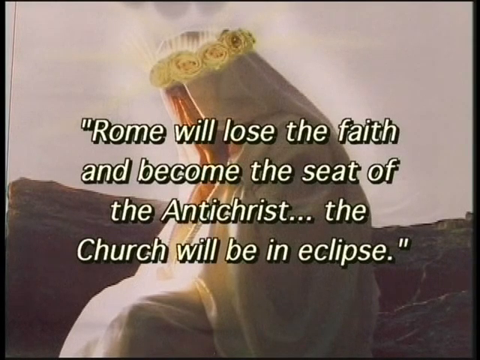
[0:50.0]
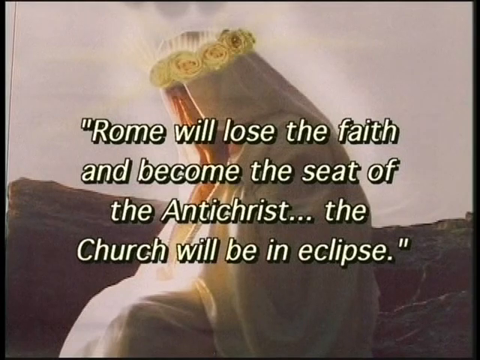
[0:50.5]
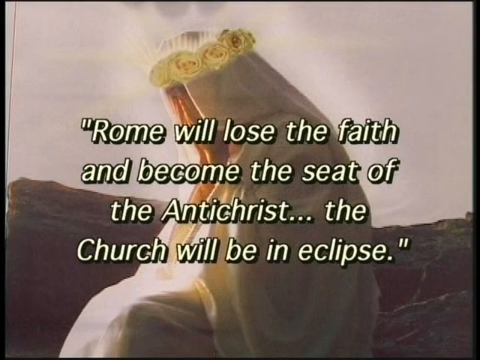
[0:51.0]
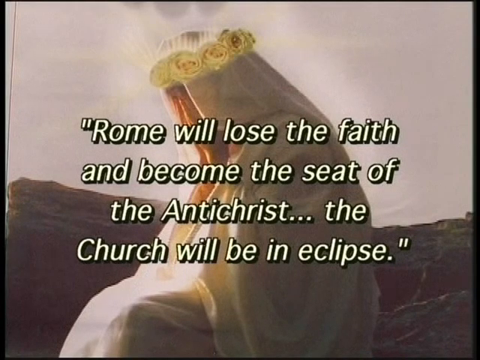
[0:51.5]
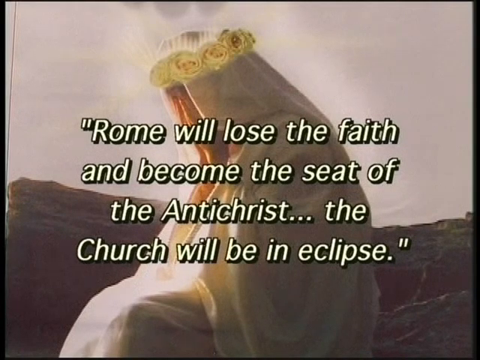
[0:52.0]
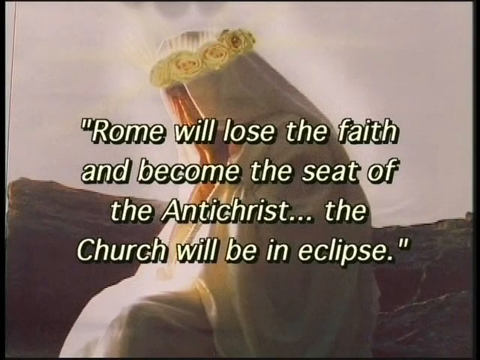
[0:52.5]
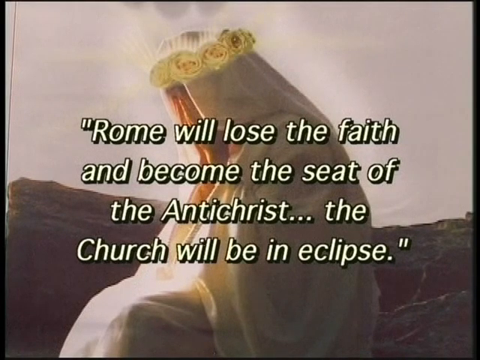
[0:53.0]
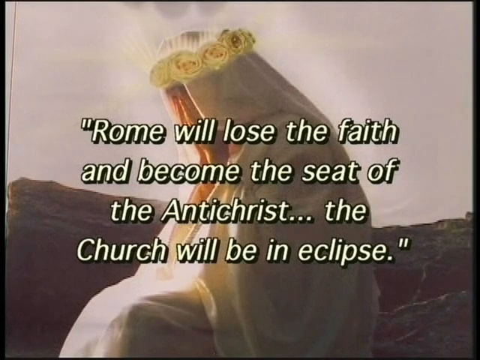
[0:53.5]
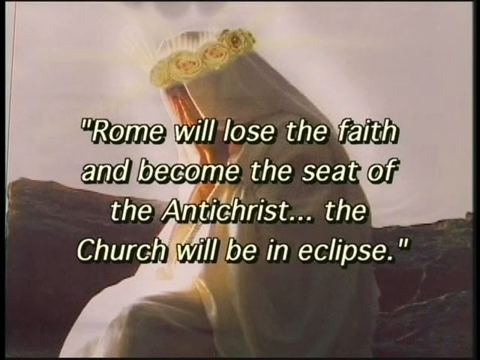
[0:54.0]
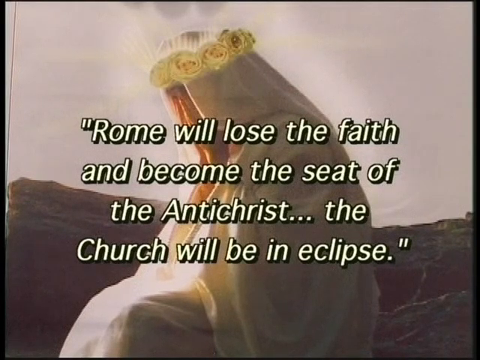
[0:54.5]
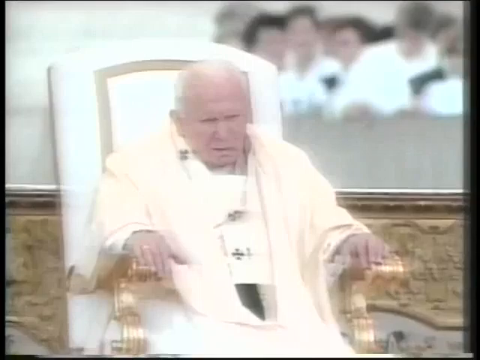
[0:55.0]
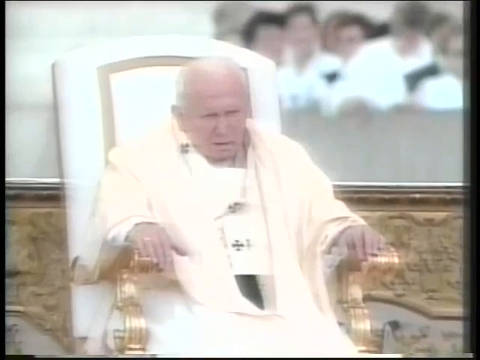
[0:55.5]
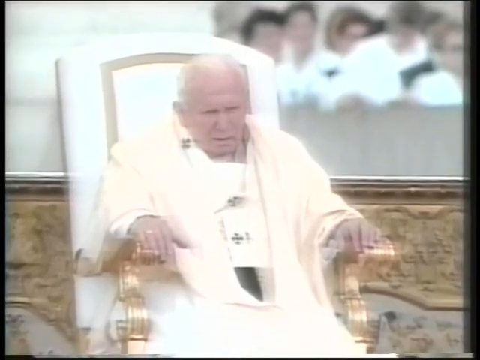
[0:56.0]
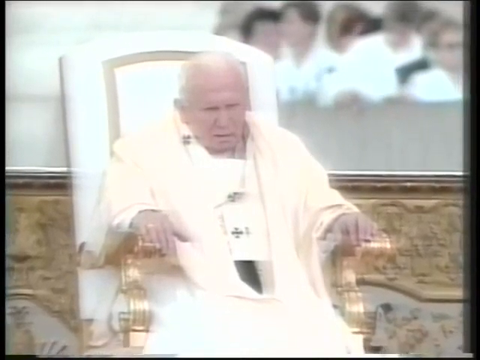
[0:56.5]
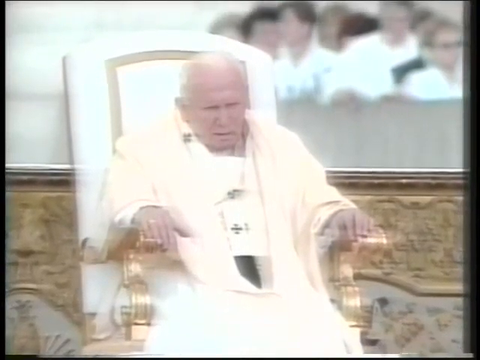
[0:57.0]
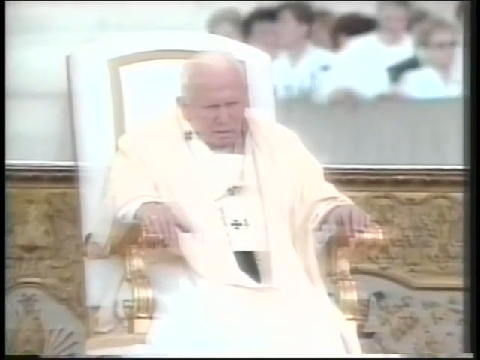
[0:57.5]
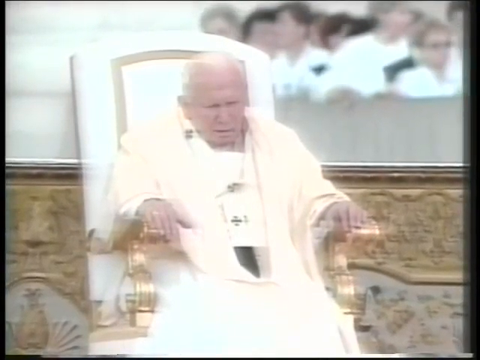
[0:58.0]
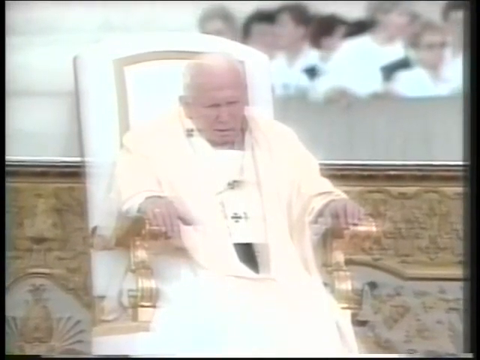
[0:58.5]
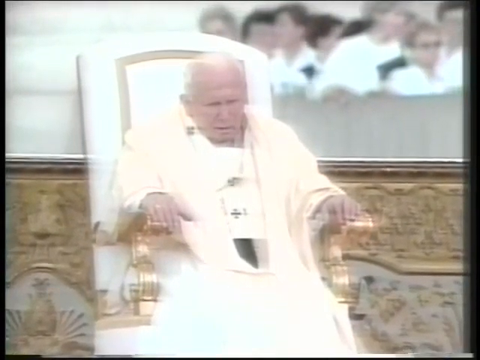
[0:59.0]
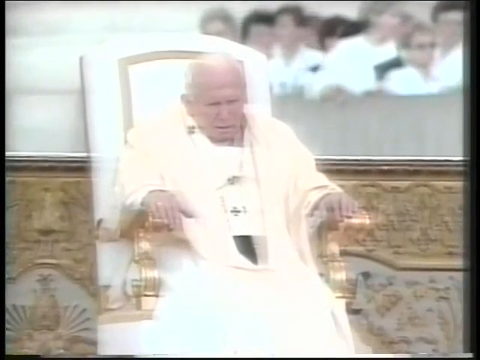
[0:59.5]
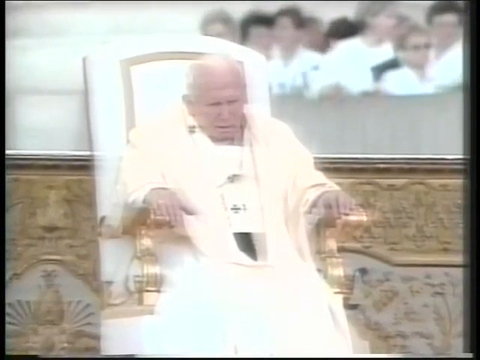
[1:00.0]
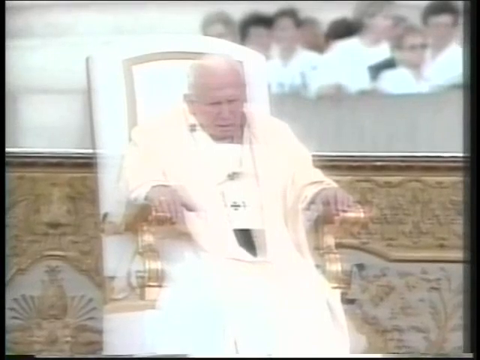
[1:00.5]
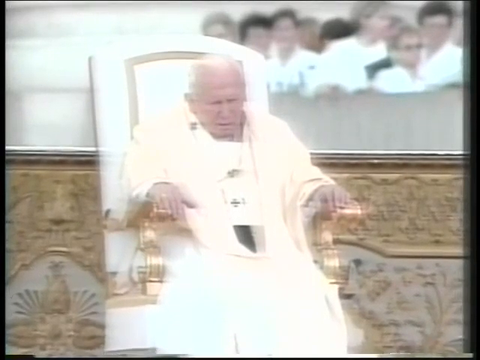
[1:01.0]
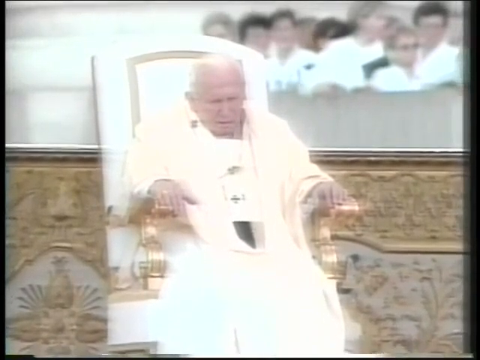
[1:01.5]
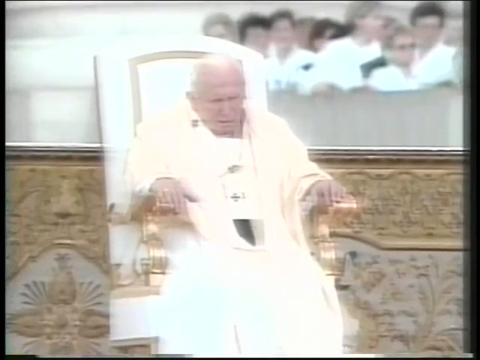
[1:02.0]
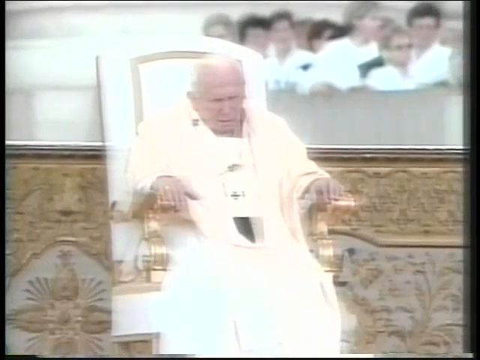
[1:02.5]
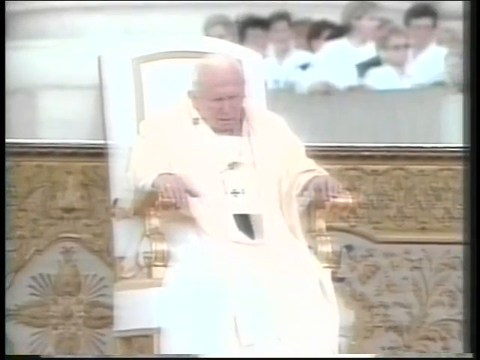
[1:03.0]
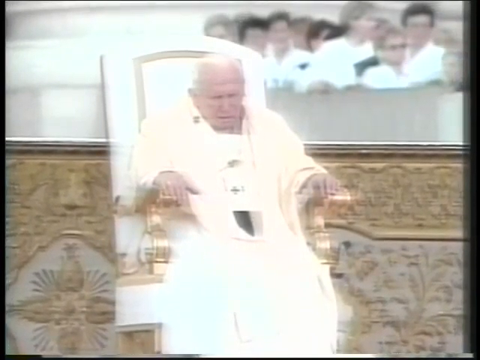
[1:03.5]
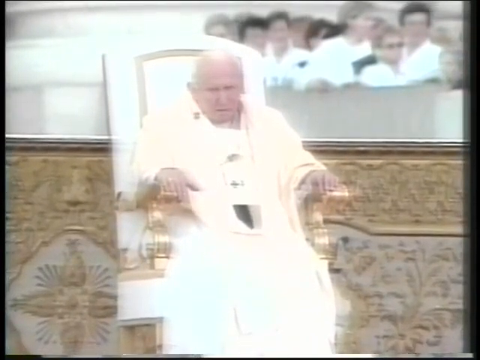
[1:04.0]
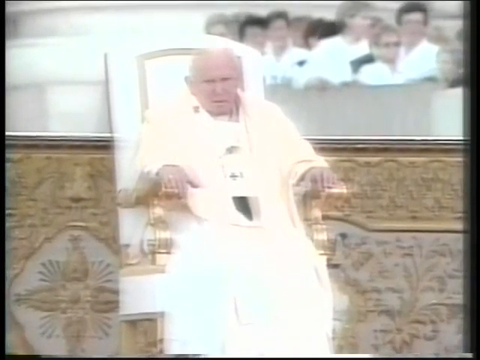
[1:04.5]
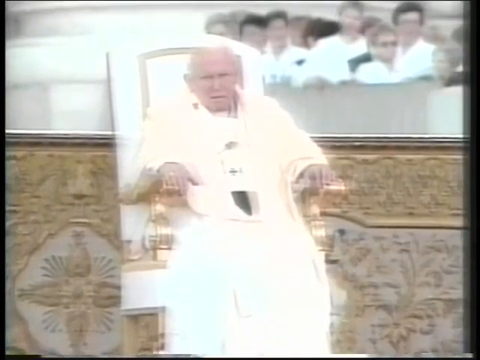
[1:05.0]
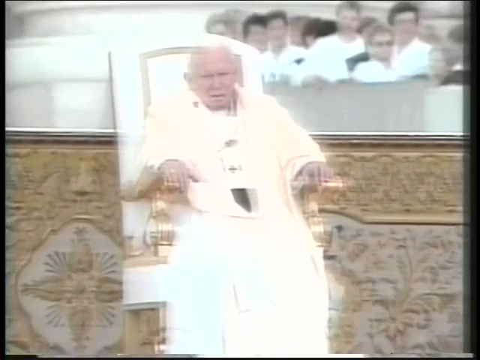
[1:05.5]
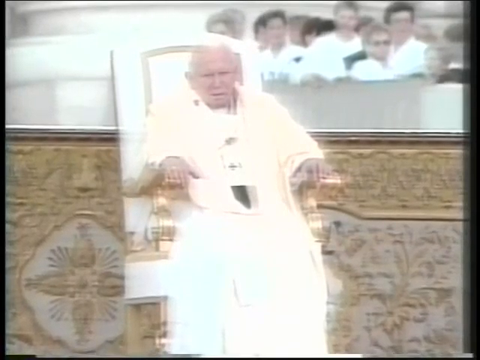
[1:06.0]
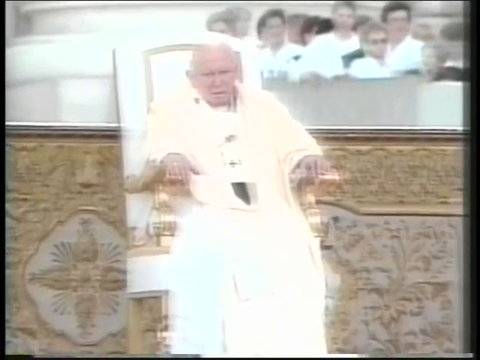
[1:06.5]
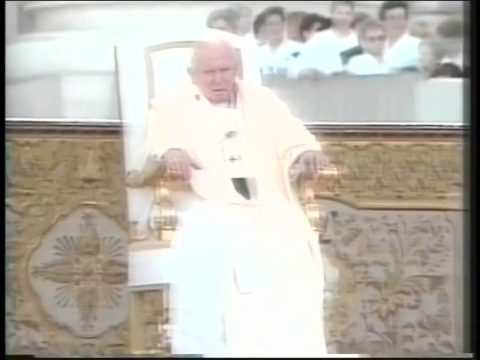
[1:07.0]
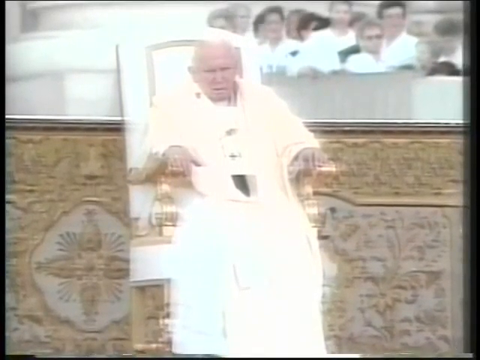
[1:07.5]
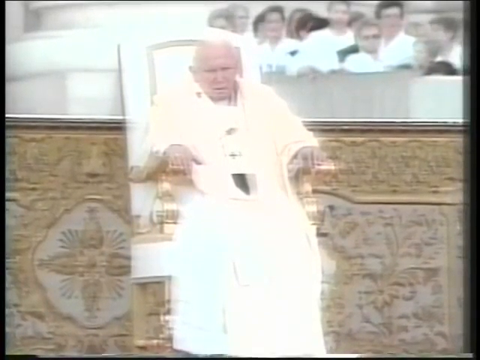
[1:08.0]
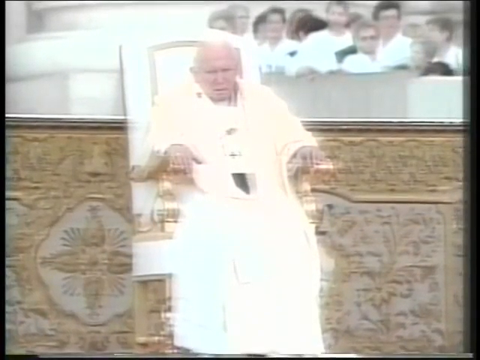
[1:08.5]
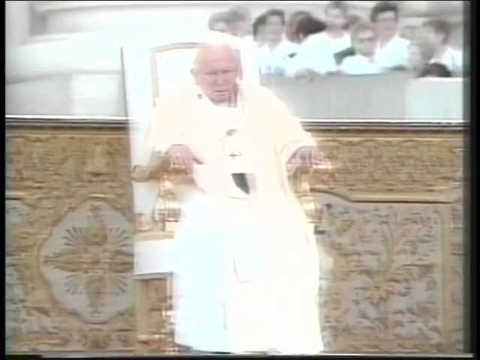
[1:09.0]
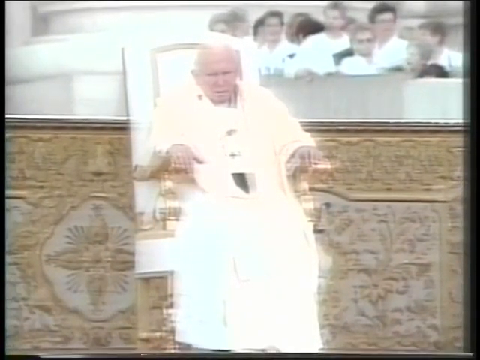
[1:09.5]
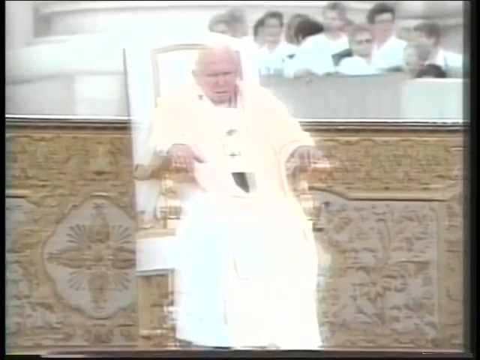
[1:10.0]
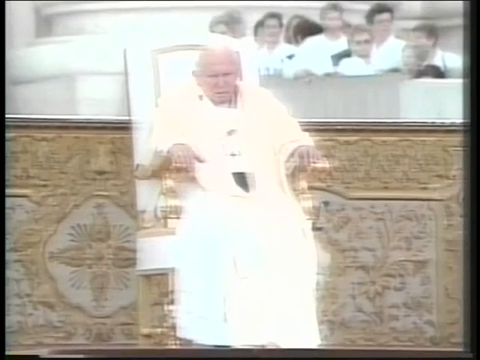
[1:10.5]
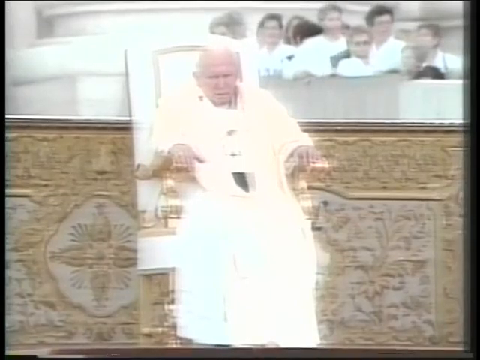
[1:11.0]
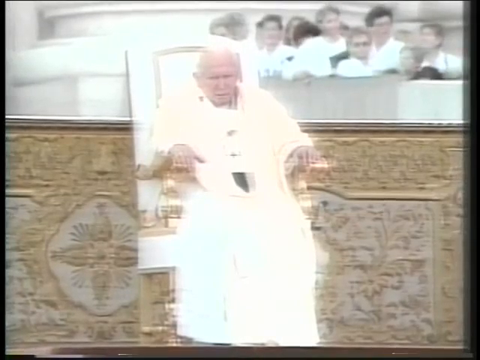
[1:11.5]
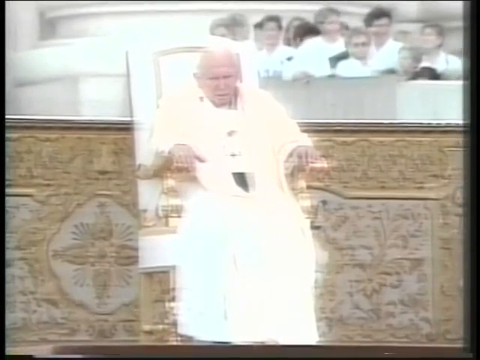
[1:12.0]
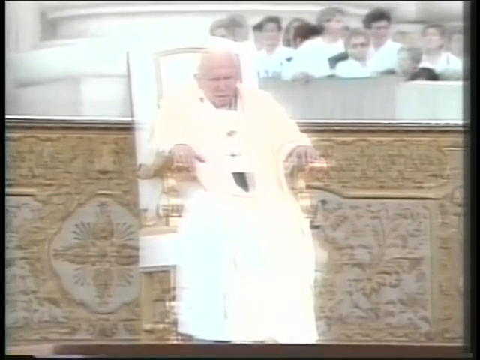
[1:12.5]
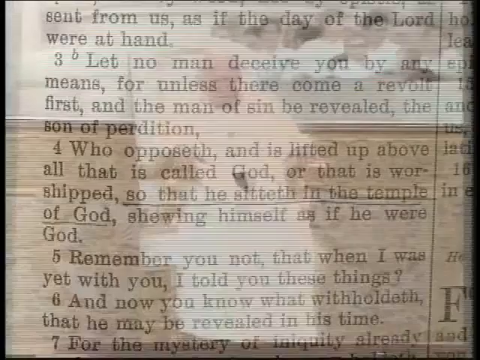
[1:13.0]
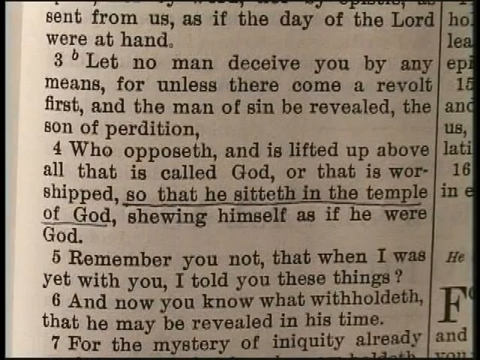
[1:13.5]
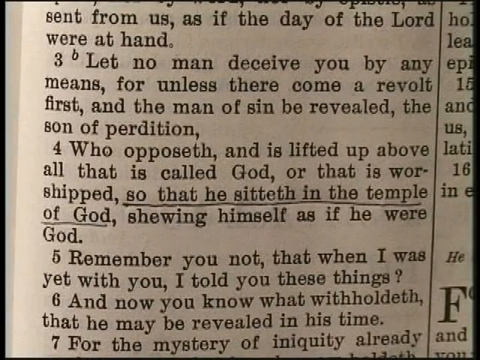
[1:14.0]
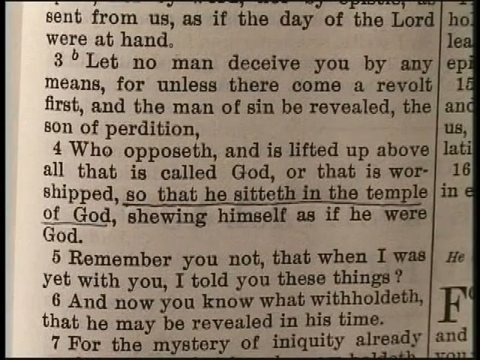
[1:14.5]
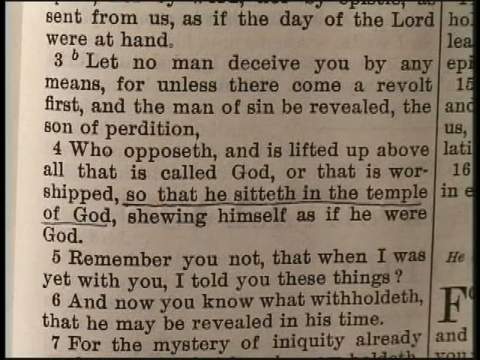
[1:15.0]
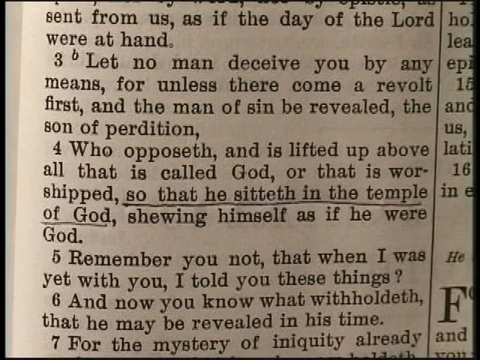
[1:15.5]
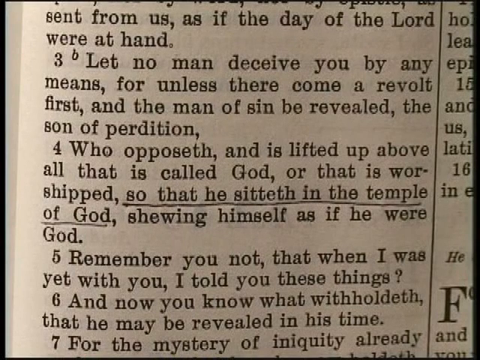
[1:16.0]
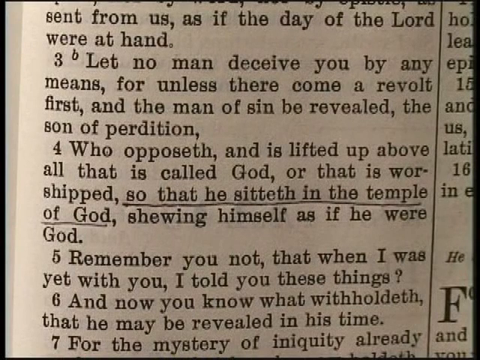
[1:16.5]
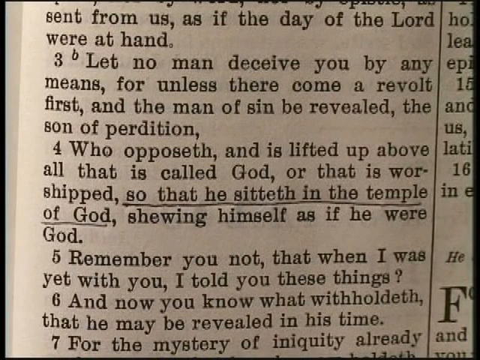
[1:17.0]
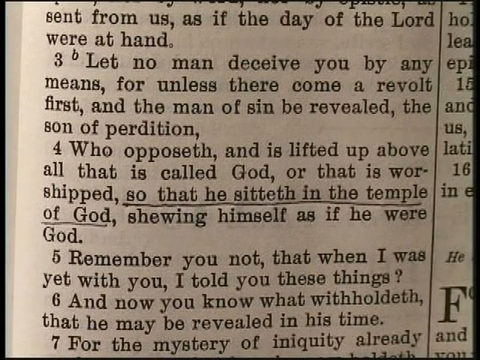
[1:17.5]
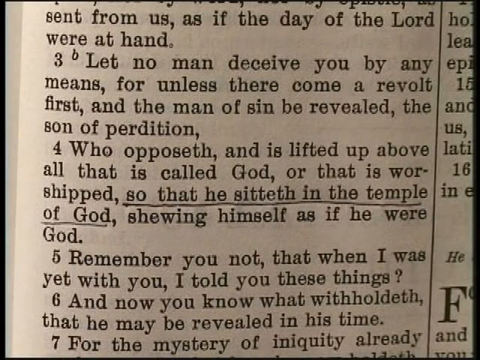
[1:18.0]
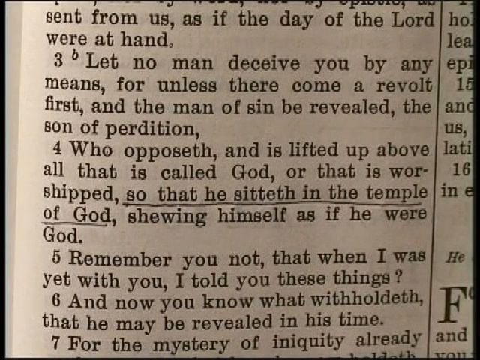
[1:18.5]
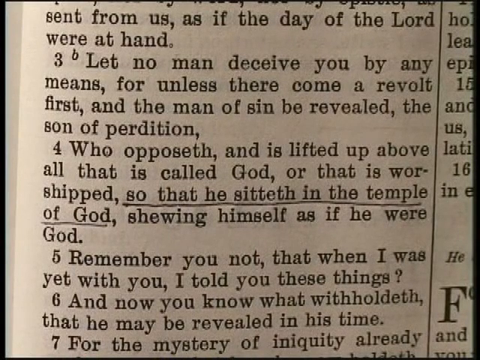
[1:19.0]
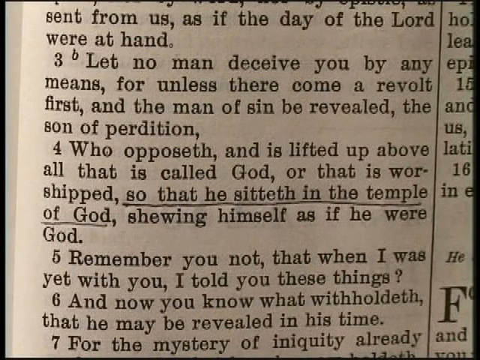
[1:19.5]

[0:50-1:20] Writing fills about two thirds of the screen in the center, white with a black outline and a black shadow down and to the left. It says "Rome will lose the faith and become the seat of the Antichrist... The church will be an eclipse." The scene moves to an image of the Pope in his chair. The chair is white, its solid back, about an inch thick, rises above his head, and a gold border runs some inches in from the edge; the arms of the chair are gold. The Pope sits with both arms covering the ends of the chair's arms, slightly hunched. The camera pulls back very slowly to reveal more of the chair and more of the Pope's lower limbs. Behind him is an ornate, solid board or balcony in gold and muted tones. Next, a close-up of a book shows a line underlined in biro halfway down the page: "So that he sitth in the temple of God." Then the image of what appears to be a lady appears again.